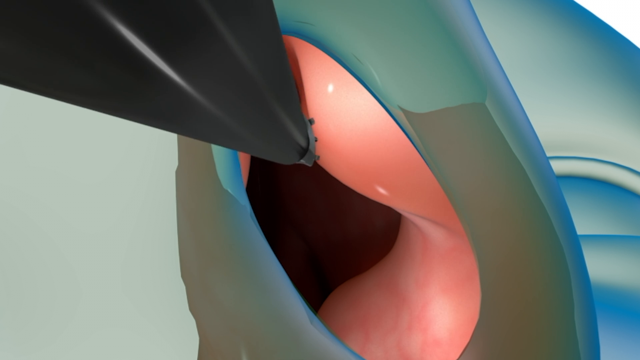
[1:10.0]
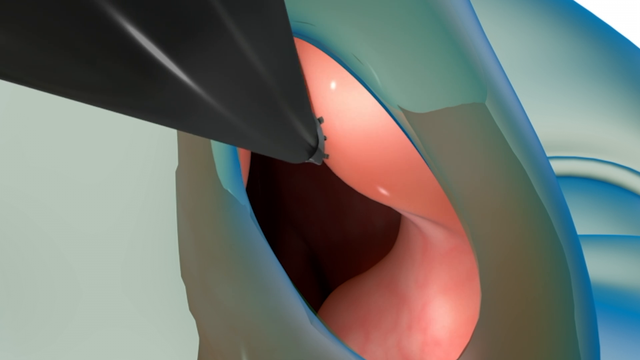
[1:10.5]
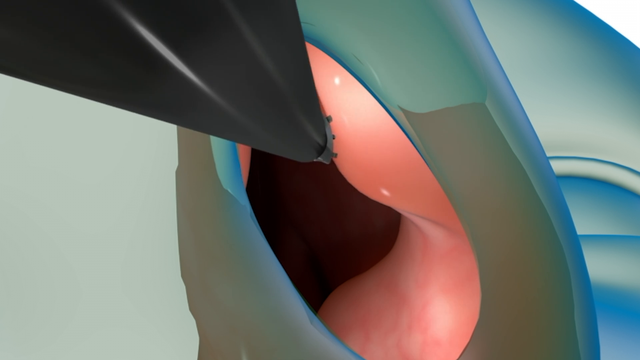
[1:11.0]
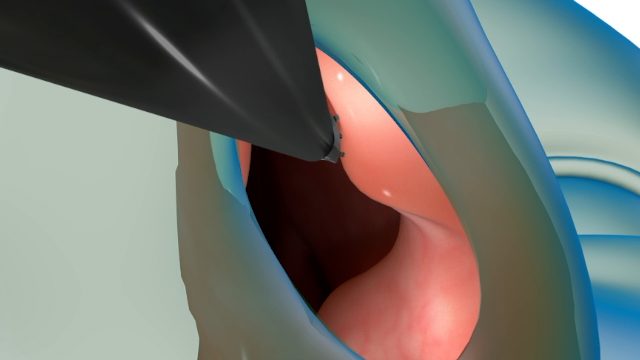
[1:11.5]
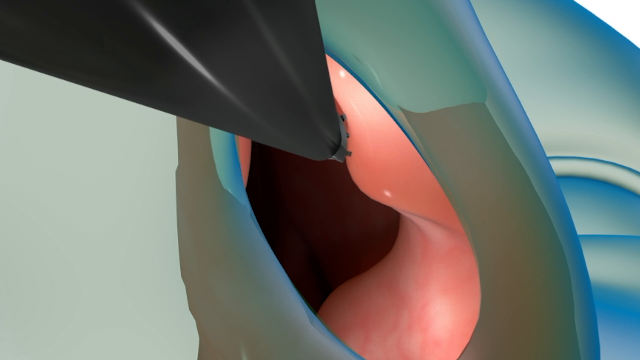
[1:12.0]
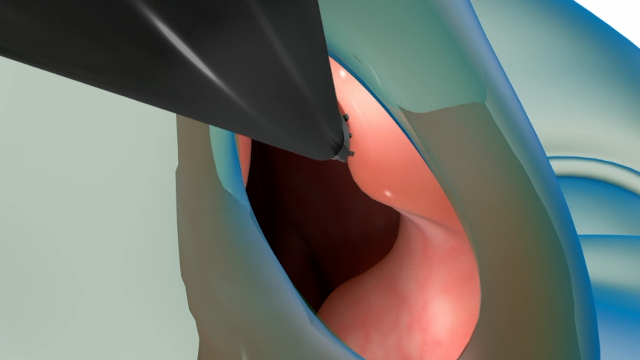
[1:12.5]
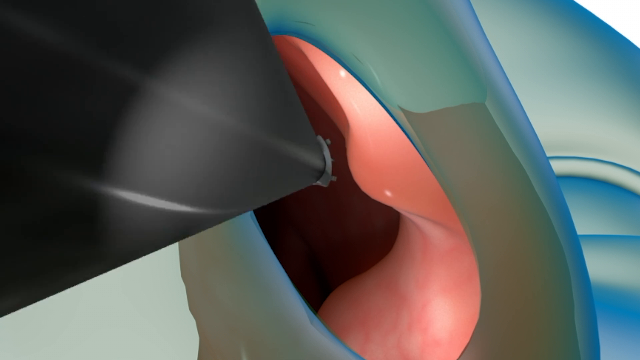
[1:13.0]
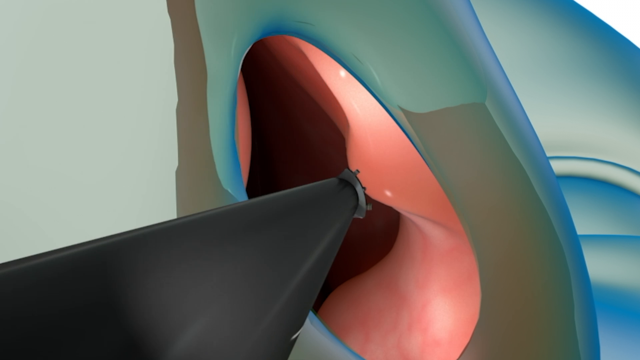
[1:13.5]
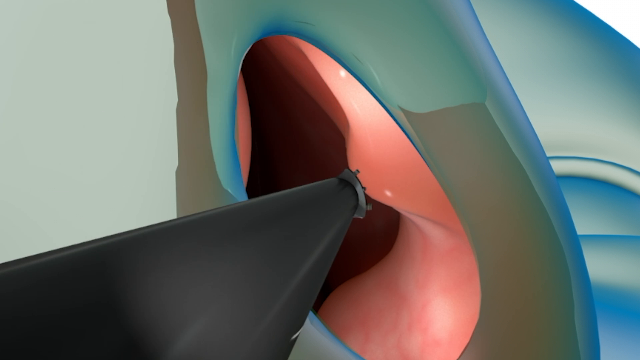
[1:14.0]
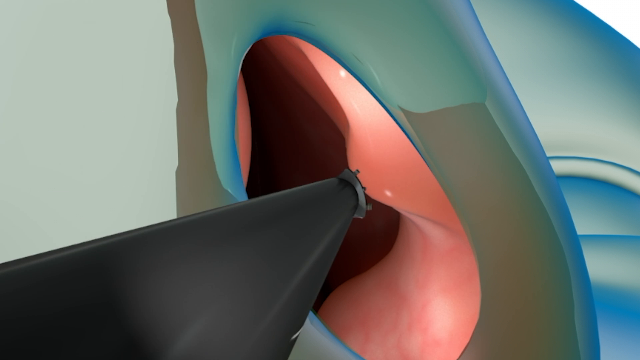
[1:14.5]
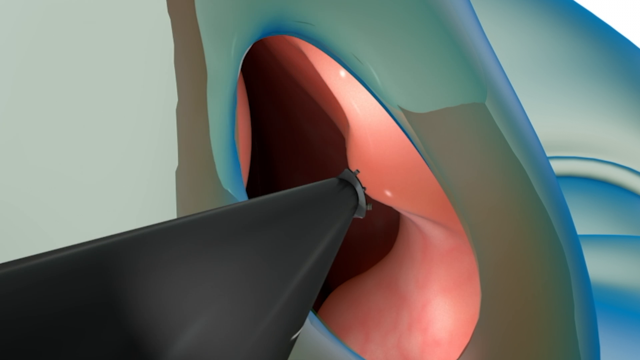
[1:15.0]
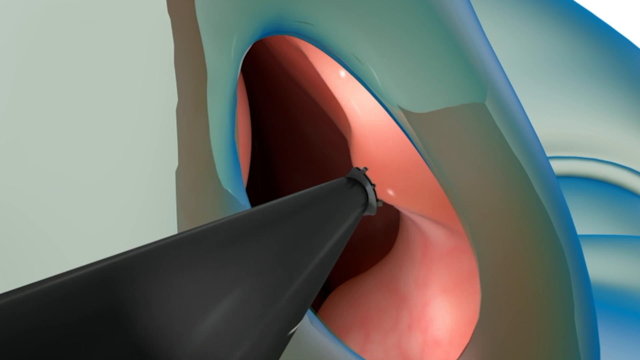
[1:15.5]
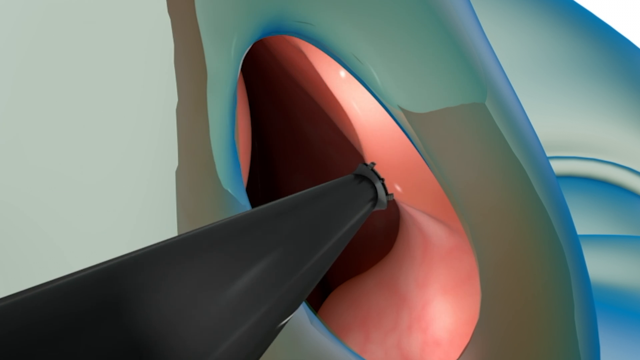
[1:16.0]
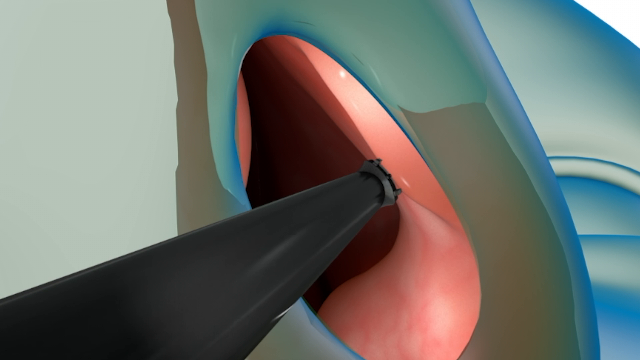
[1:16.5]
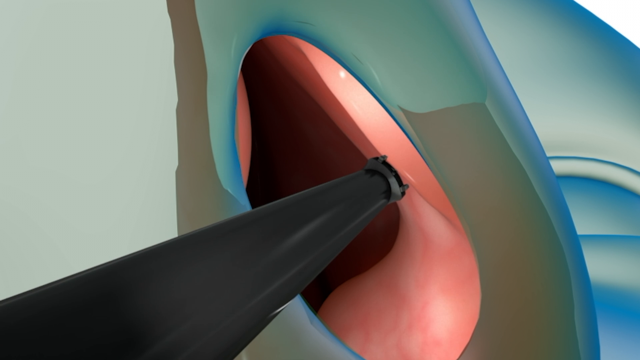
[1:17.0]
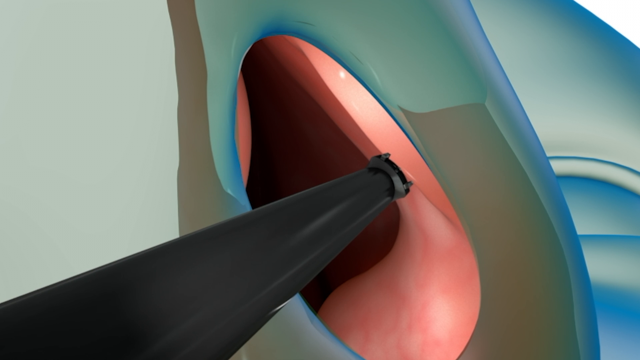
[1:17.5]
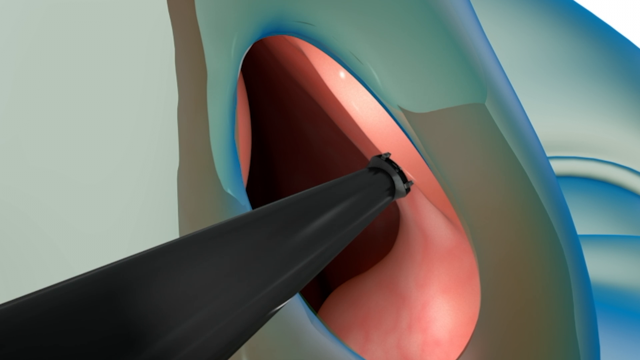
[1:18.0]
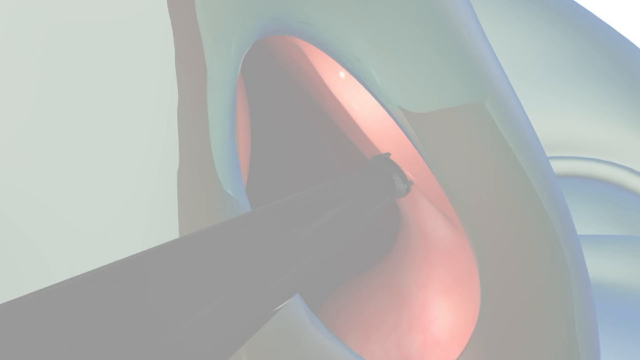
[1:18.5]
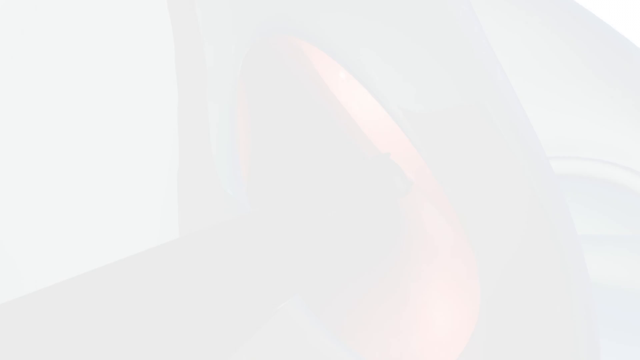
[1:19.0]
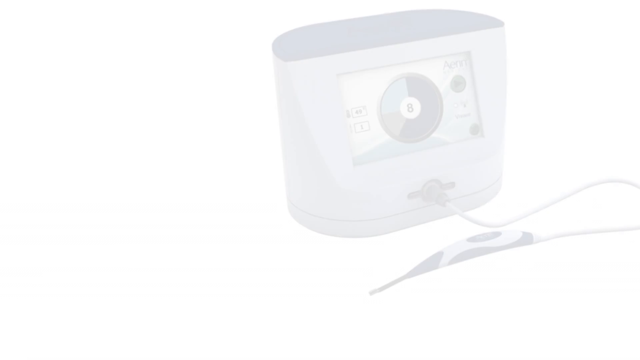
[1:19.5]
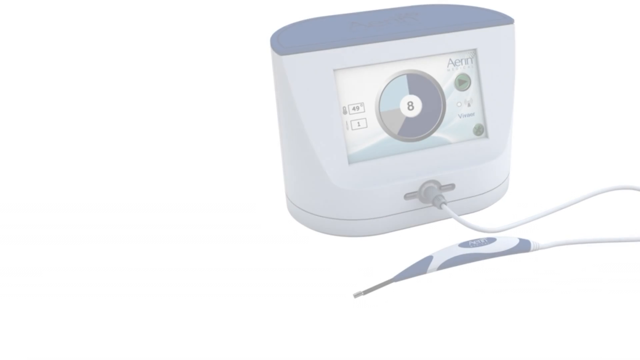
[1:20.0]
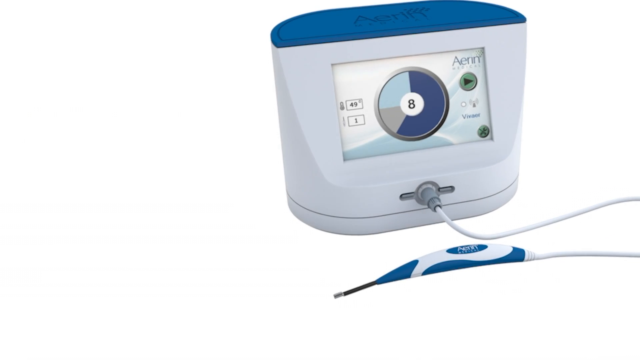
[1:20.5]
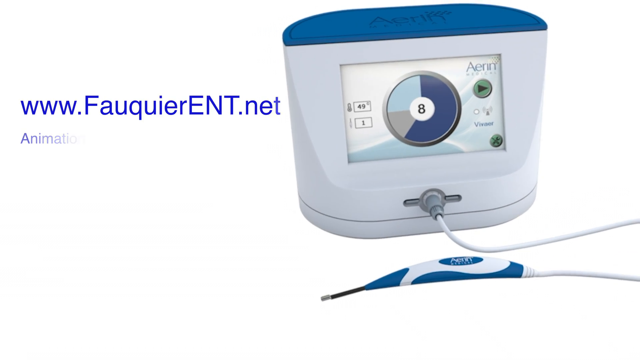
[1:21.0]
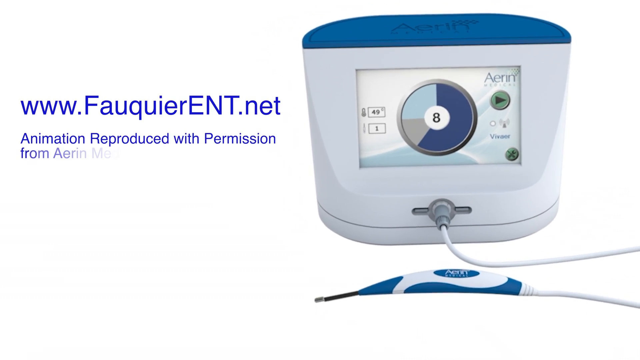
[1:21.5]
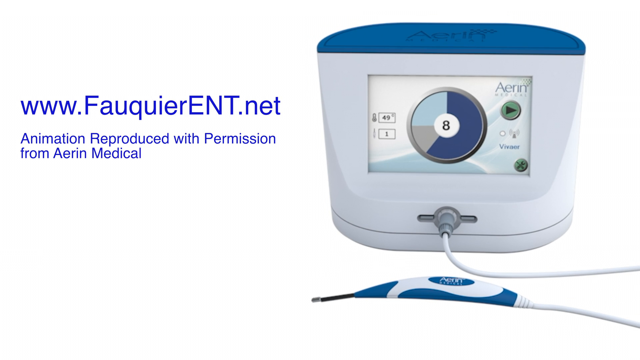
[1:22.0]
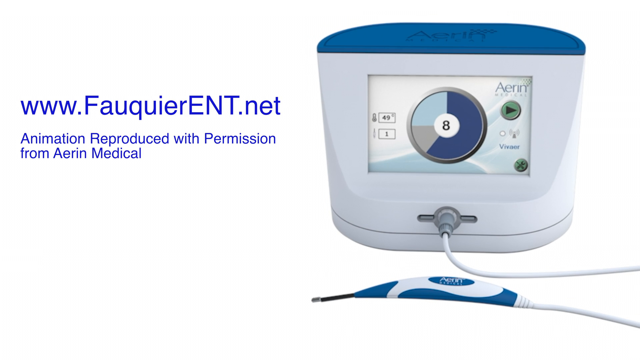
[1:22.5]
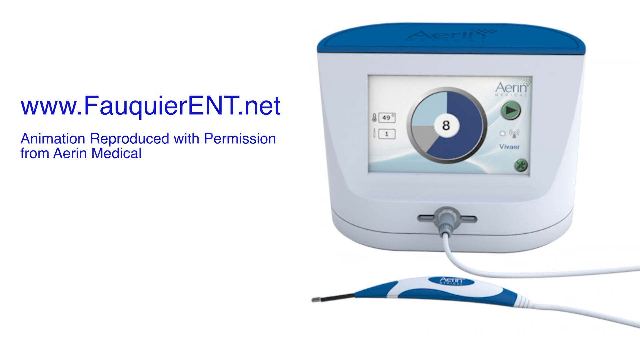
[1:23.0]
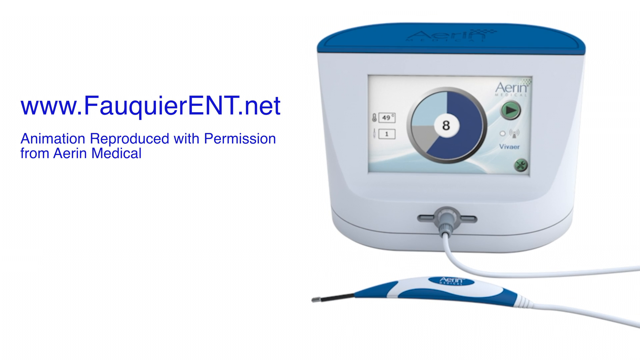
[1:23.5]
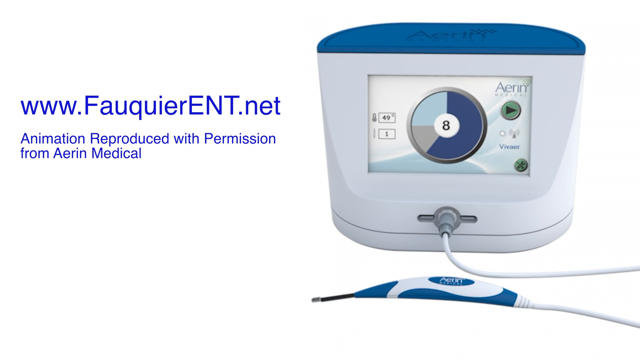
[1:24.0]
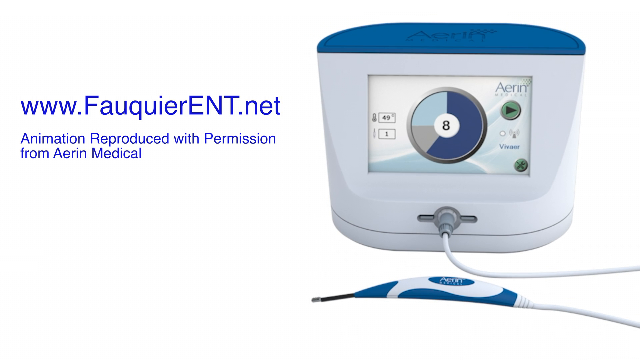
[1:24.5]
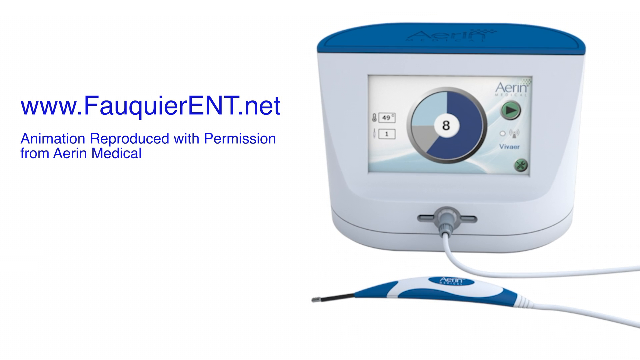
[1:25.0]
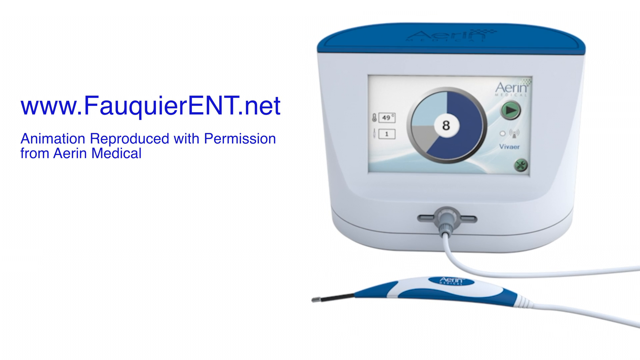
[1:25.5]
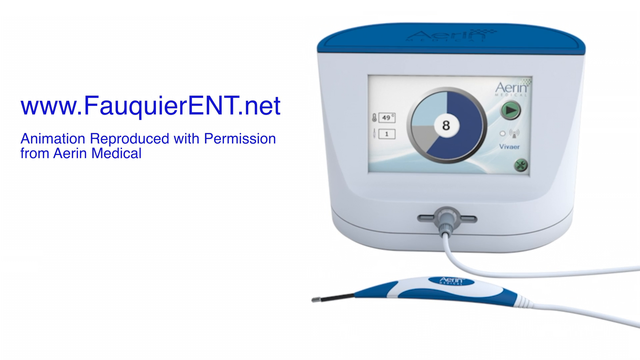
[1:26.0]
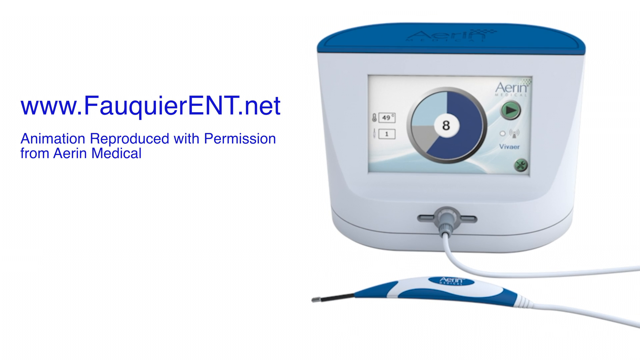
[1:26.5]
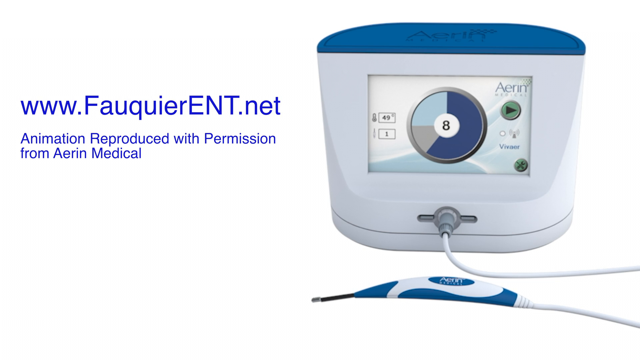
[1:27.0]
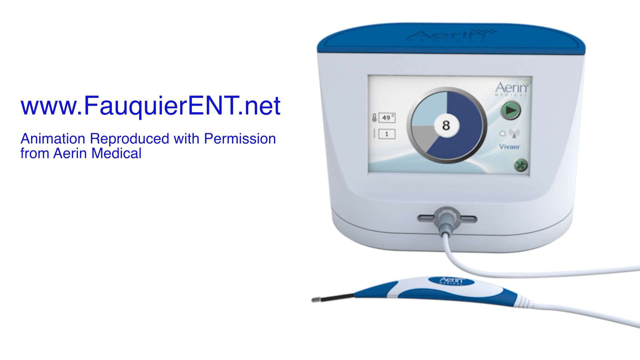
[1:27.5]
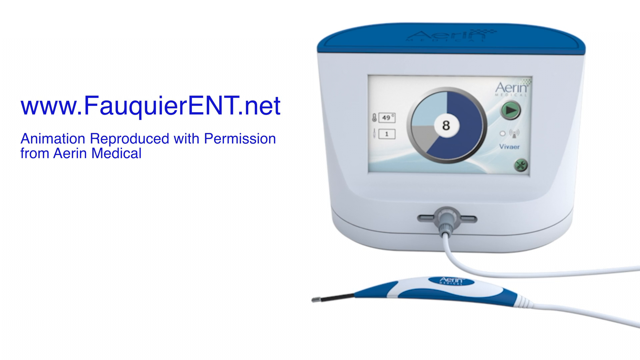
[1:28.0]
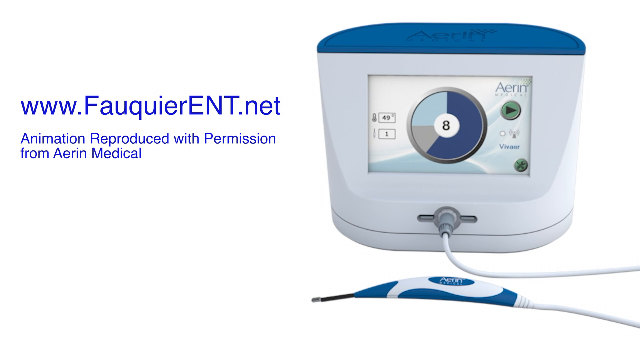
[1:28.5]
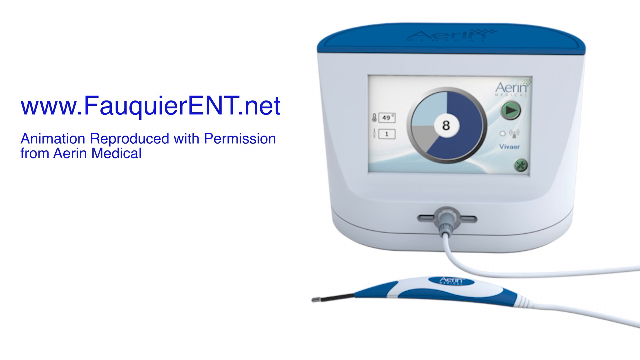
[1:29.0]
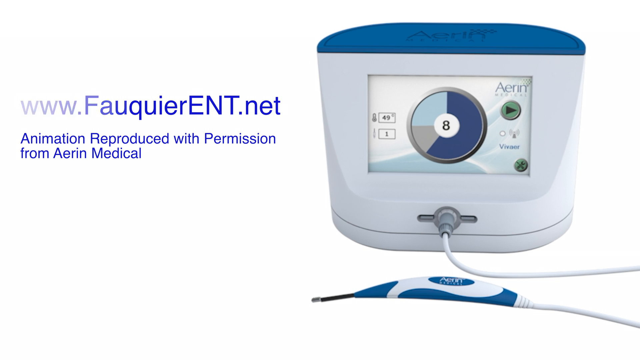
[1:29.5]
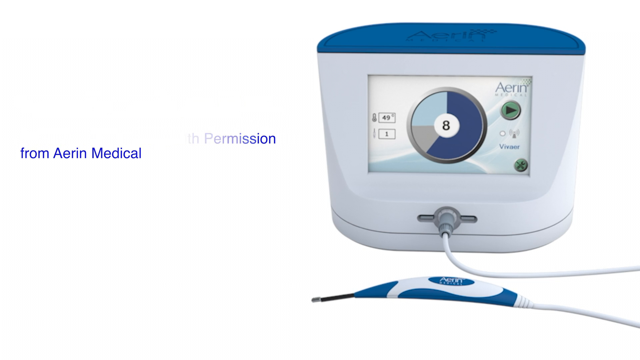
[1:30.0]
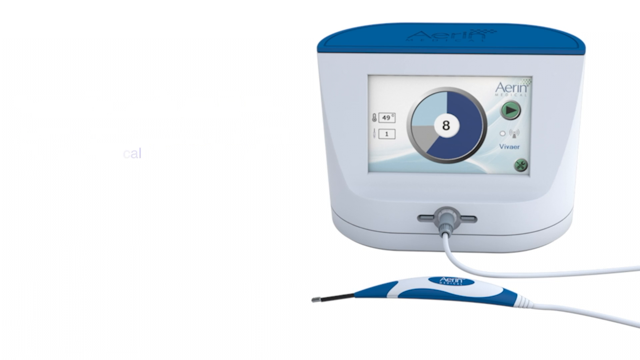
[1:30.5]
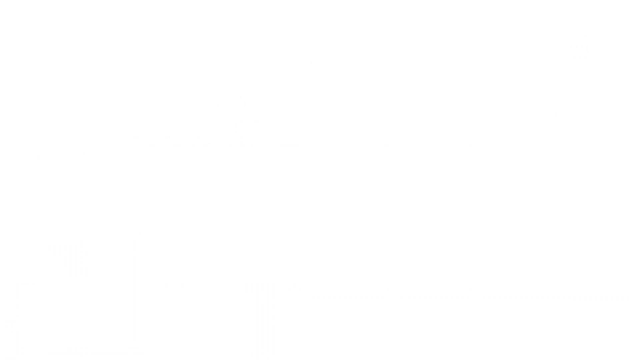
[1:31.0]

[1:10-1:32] The tool is inside the nostril. It appears to have a somewhat corkscrew-shaped shaft or body, and the part touching the nostril appears to have three small nubs on it. It continues to push in the tissue very gently and steadily, then moves downward to another inflamed section of tissue and begins pushing that in. As it pushes, it goes slightly deeper into the nostril and the shaft moves to the bottom left of the frame. The whole screen fades to white, and some sort of medical instrument slowly appears. It is somewhat oval-shaped at the base and appears to be white, with a screen on the front. The screen has a circle reading "8" in the center, with numbers and text around the side. There appears to be a play button on the right side of the screen and a settings button on the bottom right. The top of the device is blue with text engraved at the top. Text begins appearing on the left side: a website URL at the top, and below it, "animation reproduced with permission from Aerin Medical." The text and the device remain on screen for a few moments until the video ends.